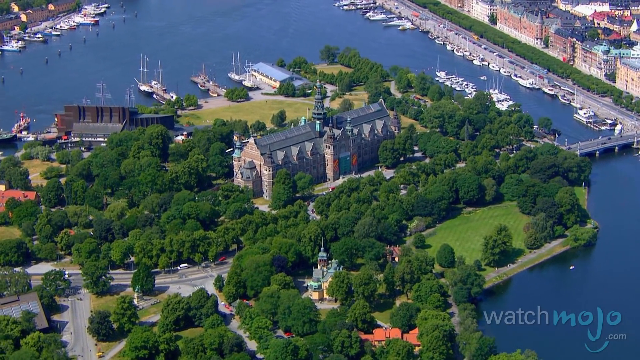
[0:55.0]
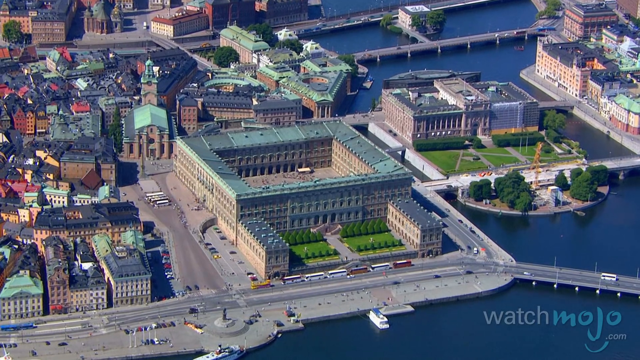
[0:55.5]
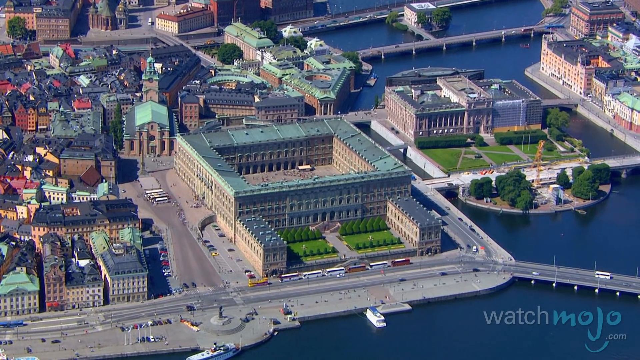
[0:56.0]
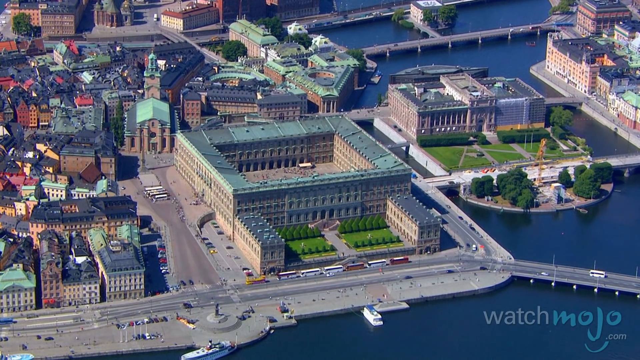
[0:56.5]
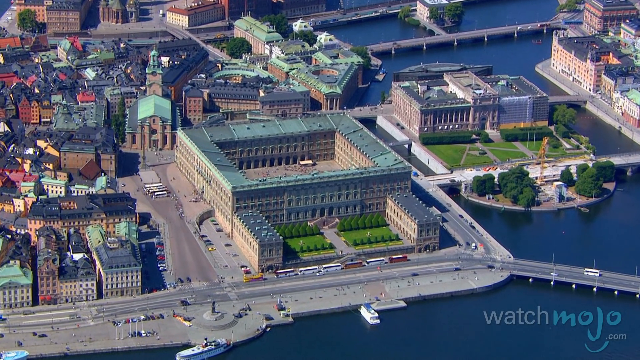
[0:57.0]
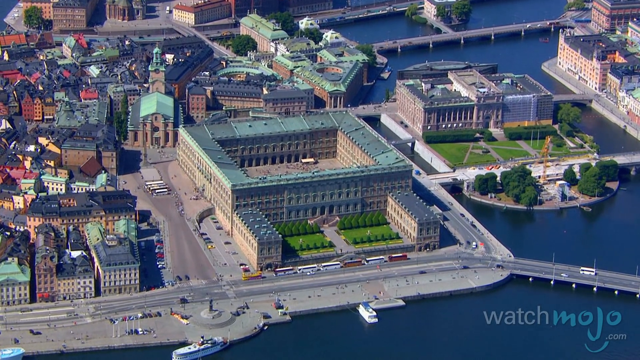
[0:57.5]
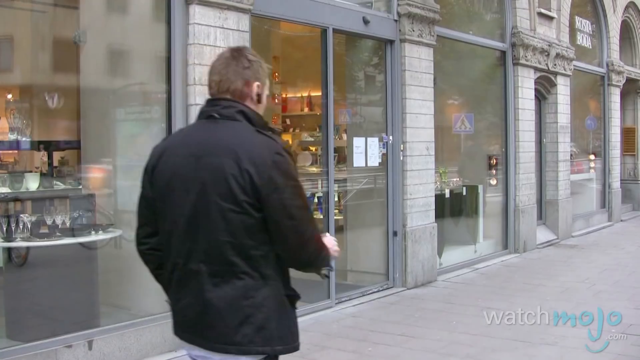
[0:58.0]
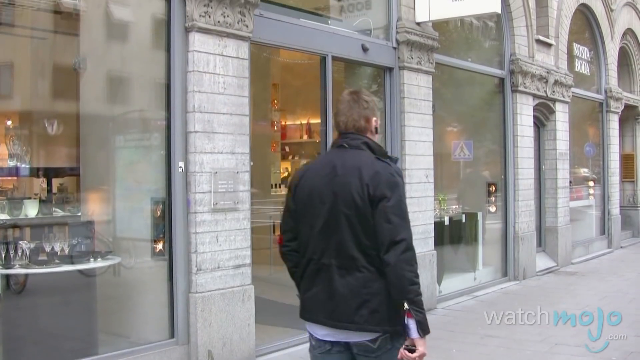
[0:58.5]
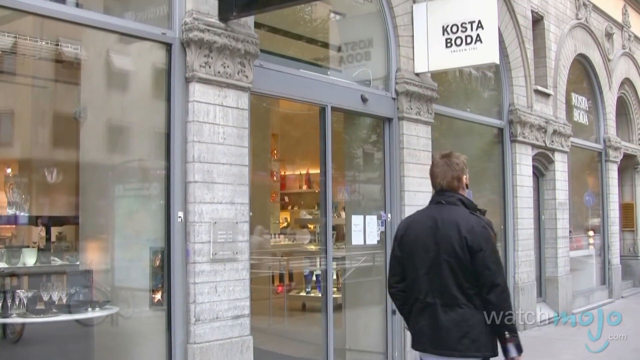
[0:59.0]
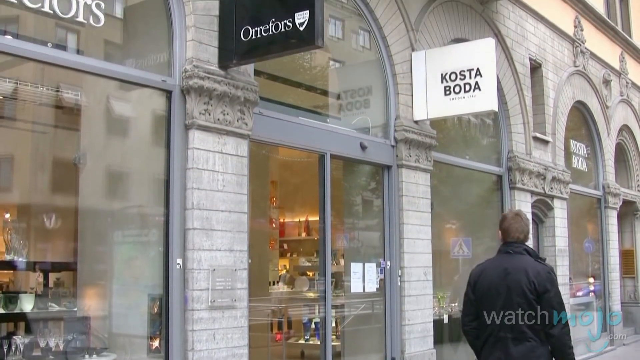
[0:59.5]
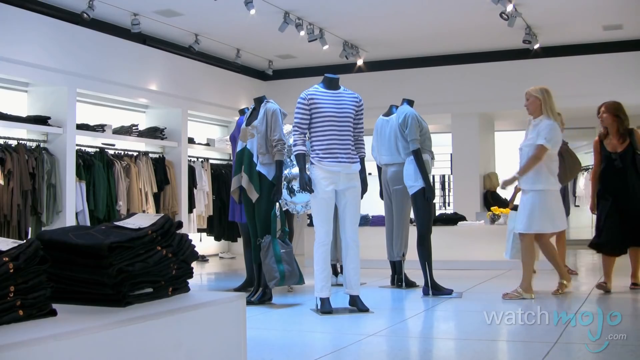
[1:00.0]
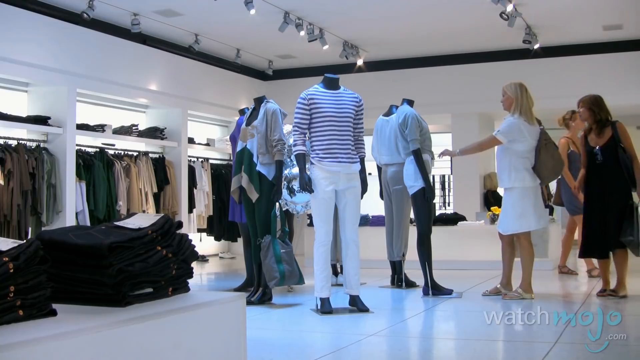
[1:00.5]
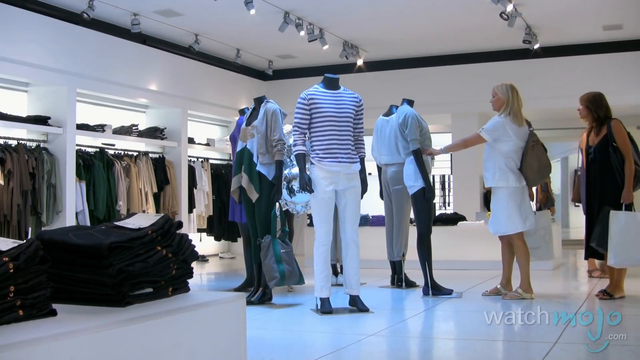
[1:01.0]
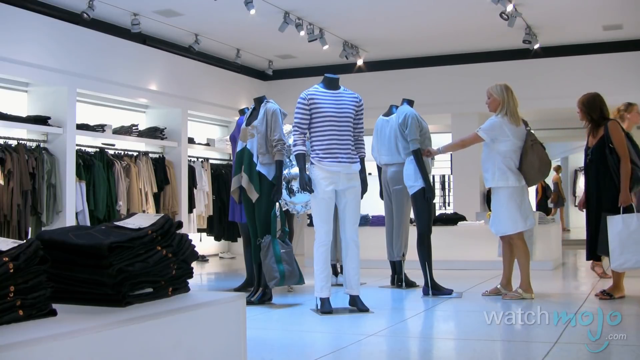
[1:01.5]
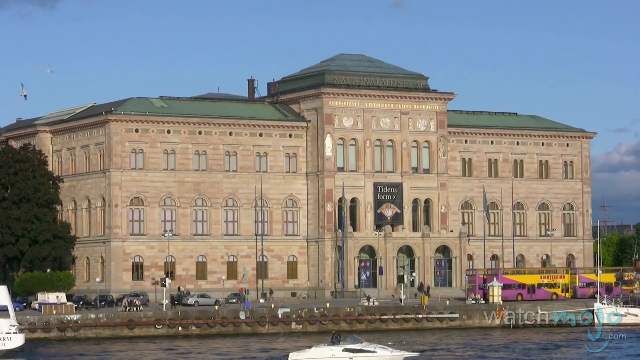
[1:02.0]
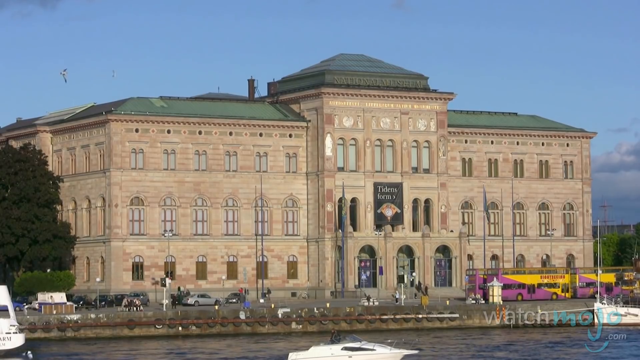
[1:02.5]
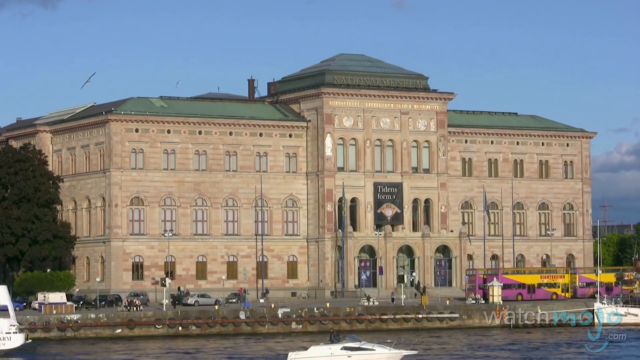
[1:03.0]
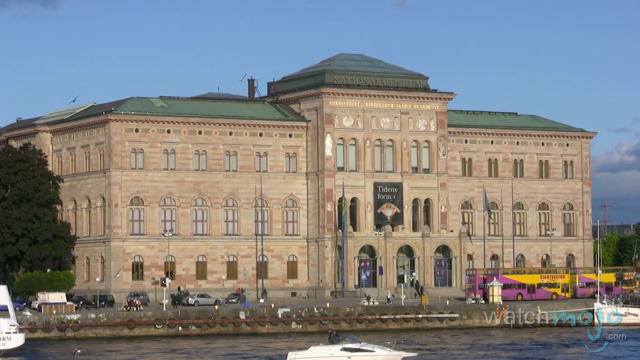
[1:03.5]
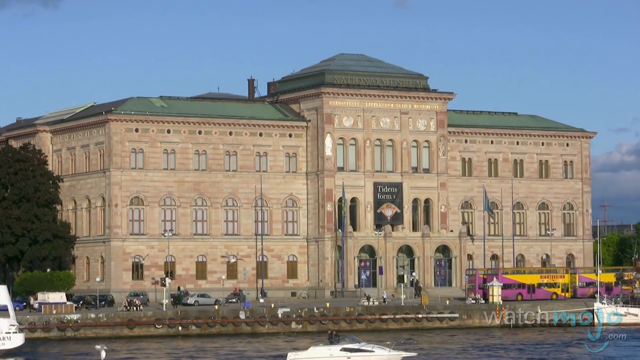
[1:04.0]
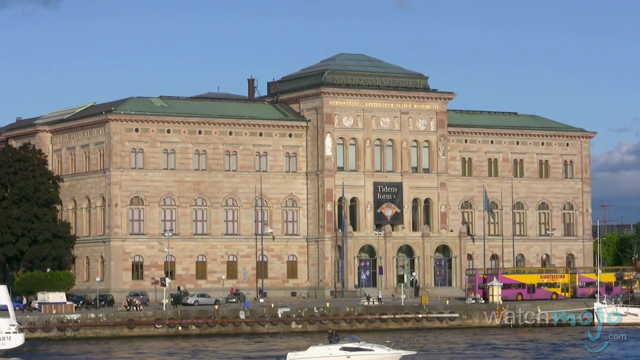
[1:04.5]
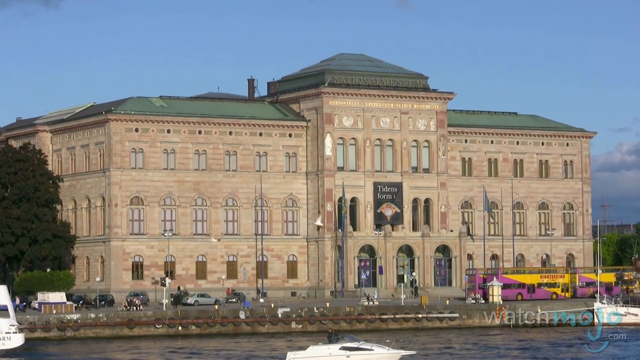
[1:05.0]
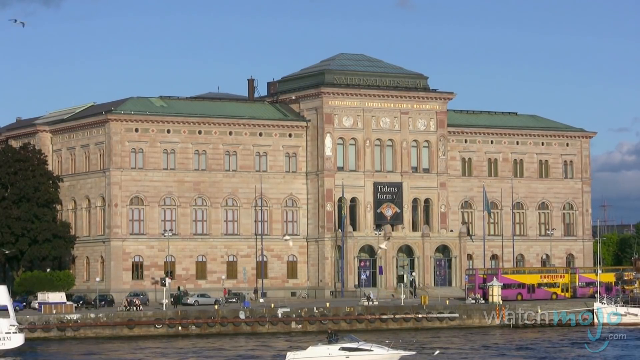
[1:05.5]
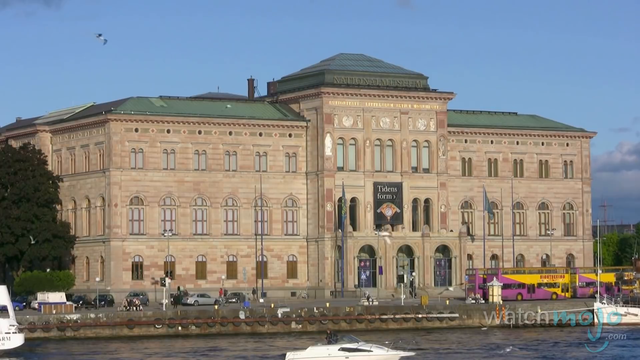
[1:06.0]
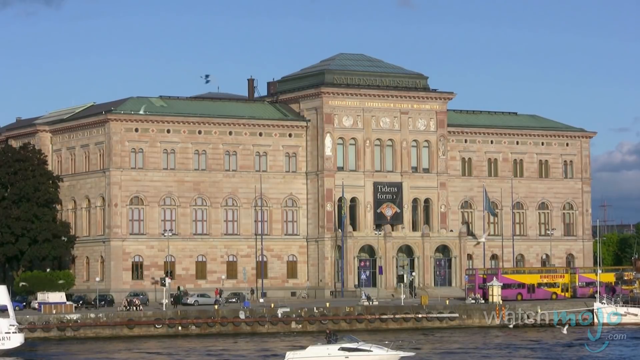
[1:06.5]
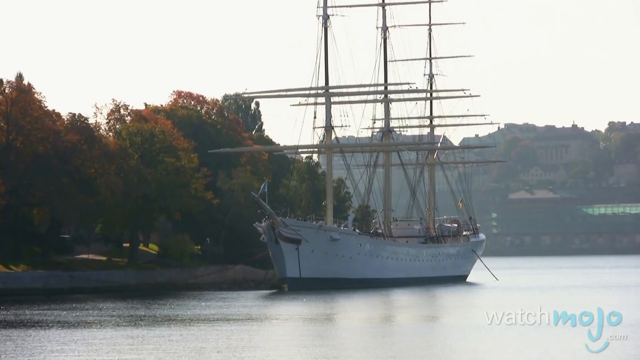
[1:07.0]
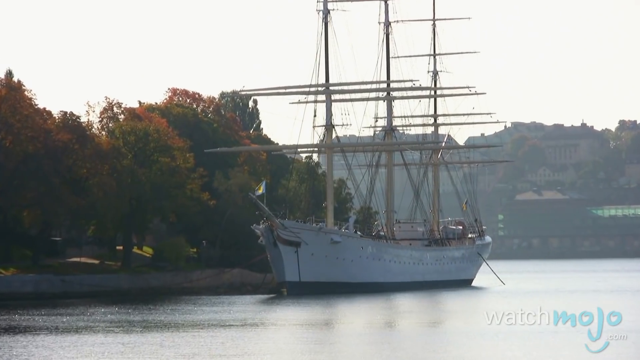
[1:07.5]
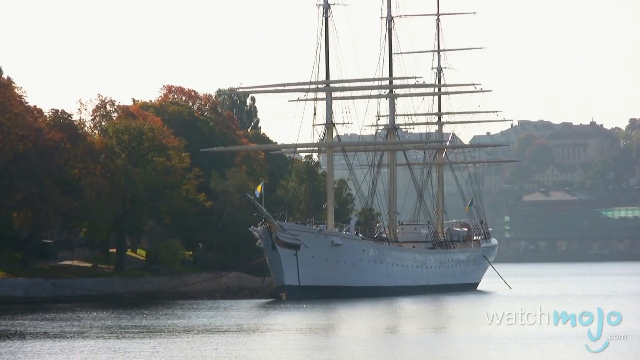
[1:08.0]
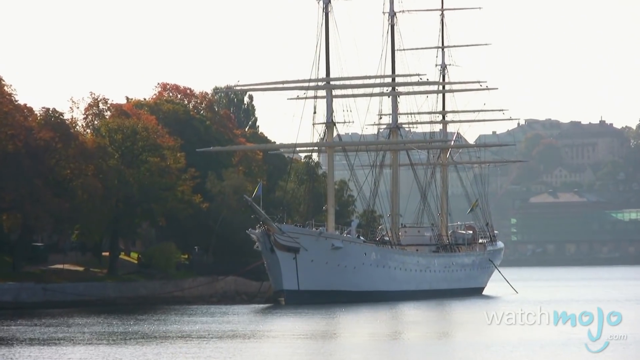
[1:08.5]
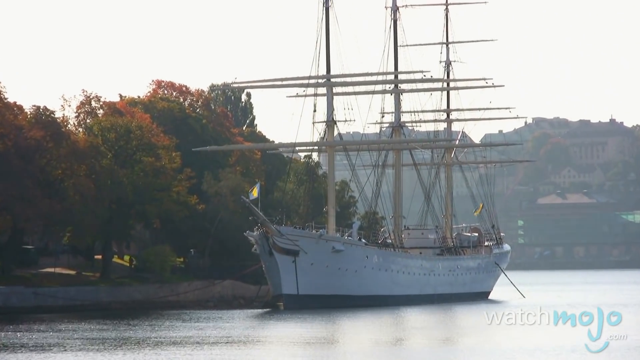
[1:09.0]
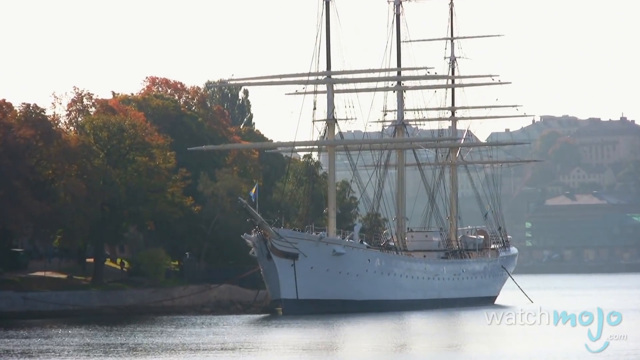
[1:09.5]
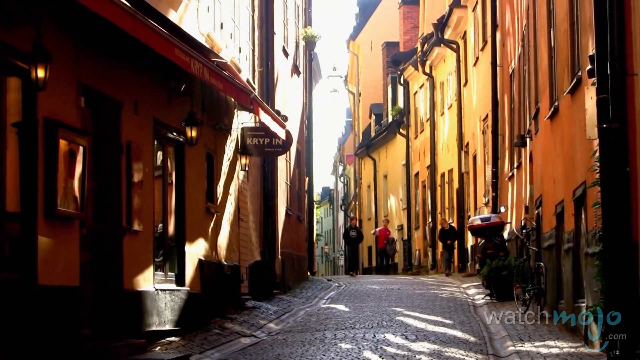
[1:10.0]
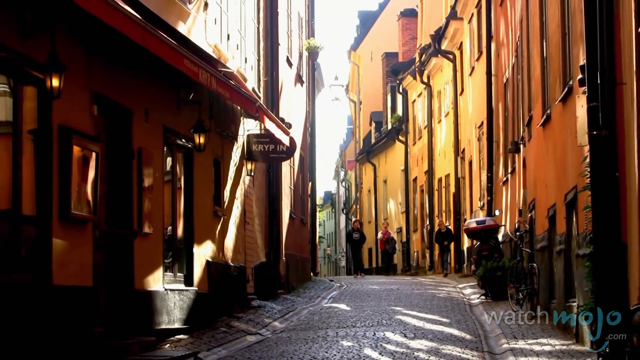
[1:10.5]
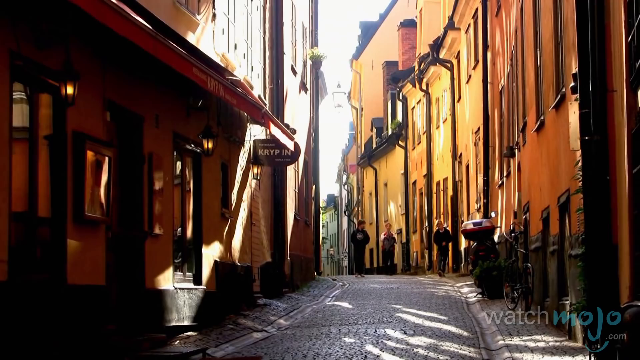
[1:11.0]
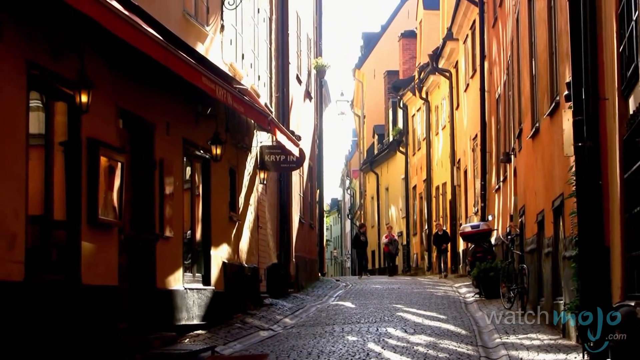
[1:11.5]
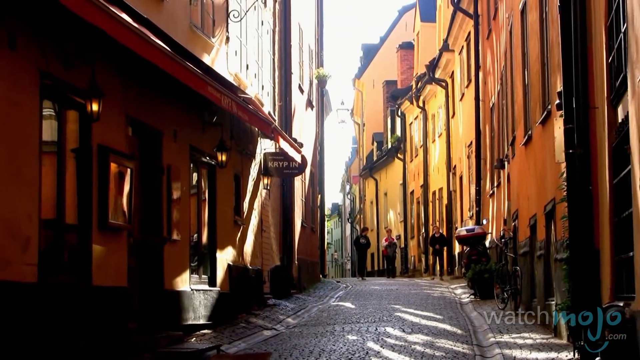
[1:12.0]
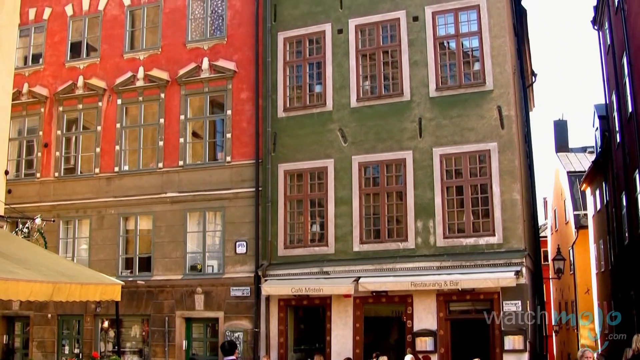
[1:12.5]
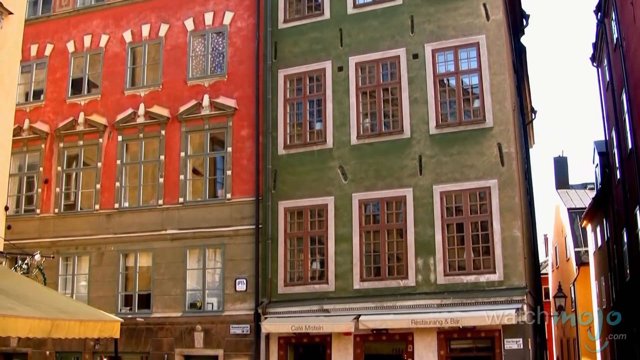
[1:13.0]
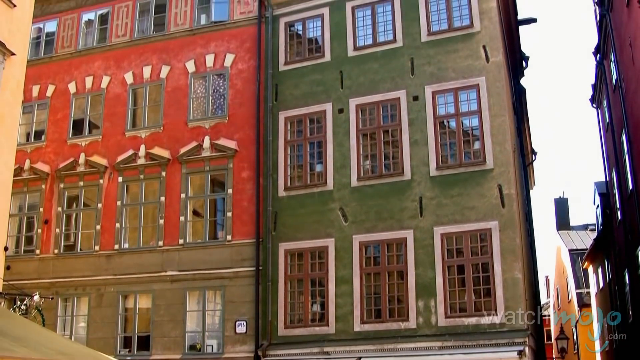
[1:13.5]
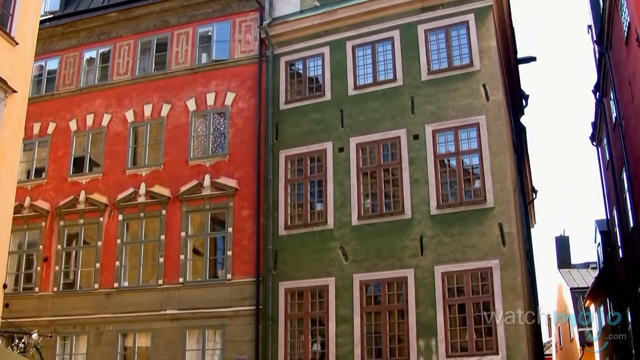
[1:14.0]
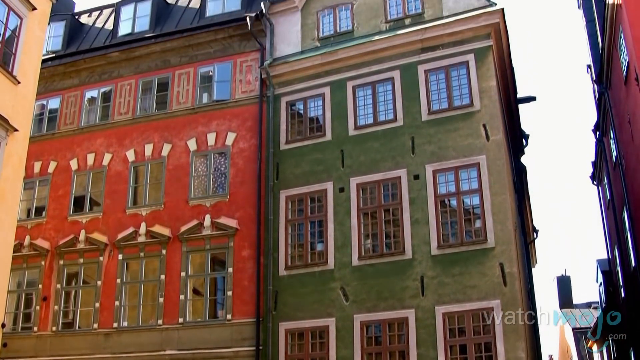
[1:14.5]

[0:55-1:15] Individuals shop in an upscale clothing store with a white interior, looking at dressed mannequins in what looks like casual summer clothing. The view pans through what looks like some type of union station, with birds flying in front of it, and gives an up-close look at a white boat with a lot of sails and a lot of poles coming from its middle; there appears to be a small flag on the front. The boat is docked and not moving, with no people on it, and the camera zooms in to show more detail. Next is what looks like a cobblestone-paved street where the buildings are close together, if not attached, colored burnt orange or dark gold with black trim, or maybe dark brown trim. Someone walks up the cobbled road, which has a slight hill and a slight bend, and people walk back and forth; it looks like a residential area. There is also a glimpse of another set of buildings, about four or five stories, that may have shops at the bottom and apartments at the top; one is green and the one next to it is red, and they look residential.